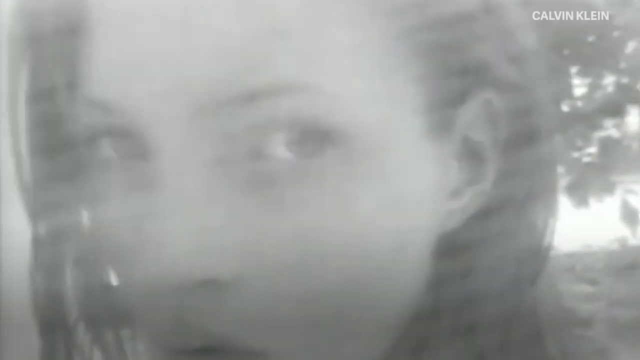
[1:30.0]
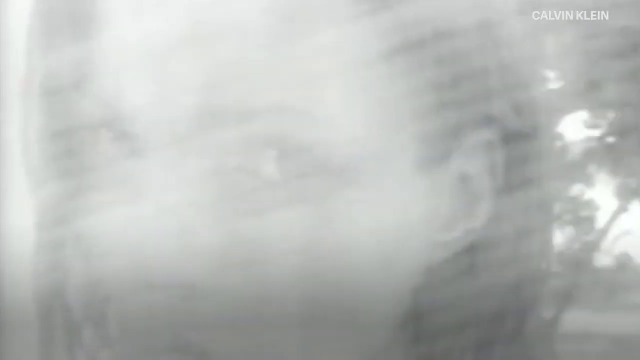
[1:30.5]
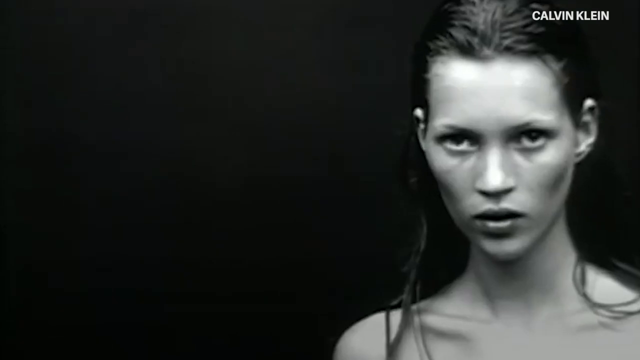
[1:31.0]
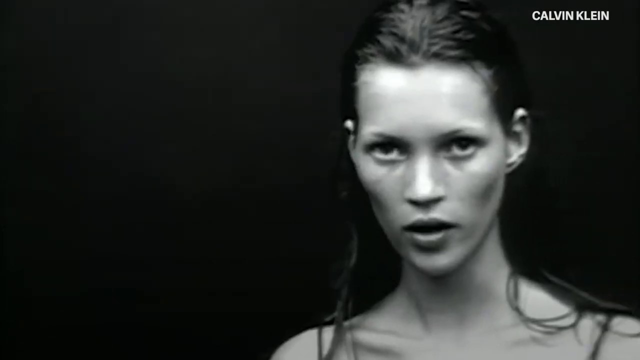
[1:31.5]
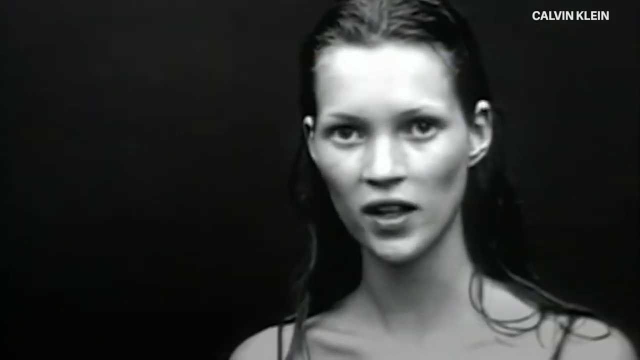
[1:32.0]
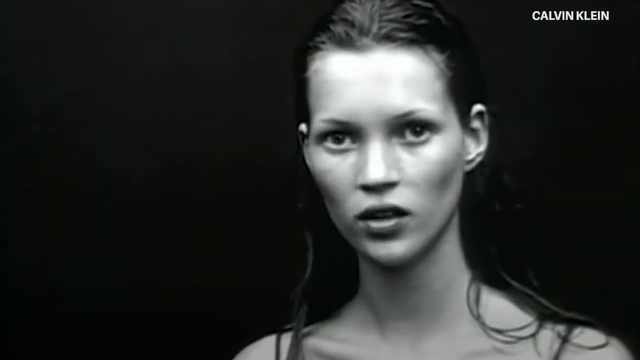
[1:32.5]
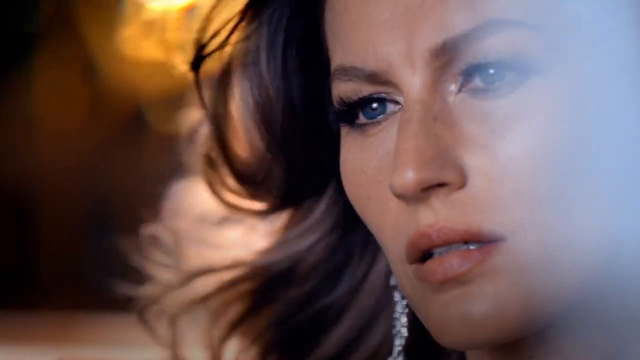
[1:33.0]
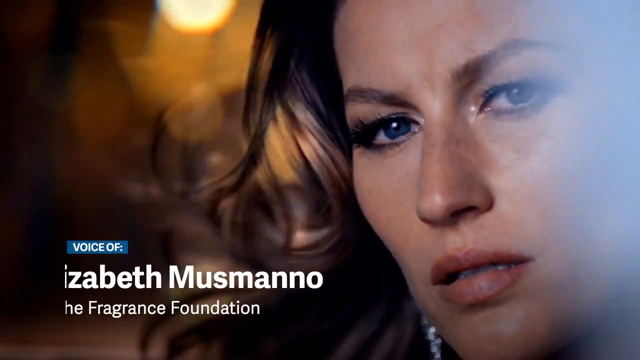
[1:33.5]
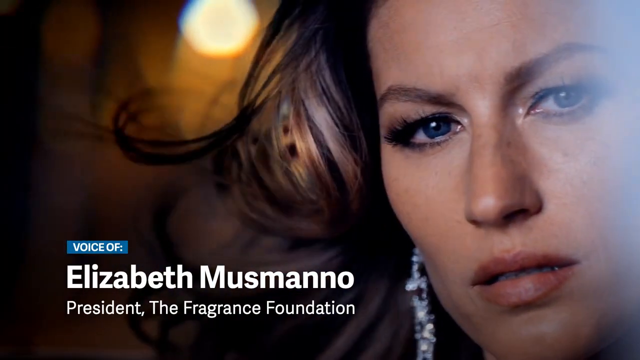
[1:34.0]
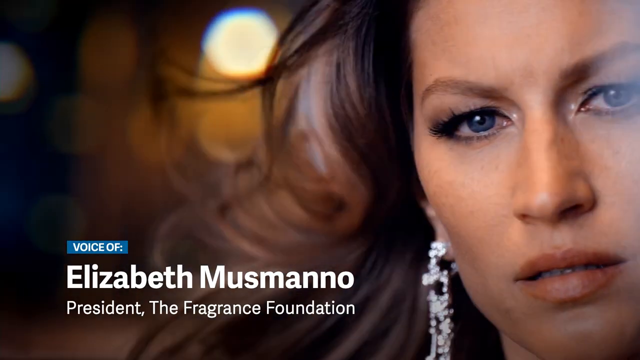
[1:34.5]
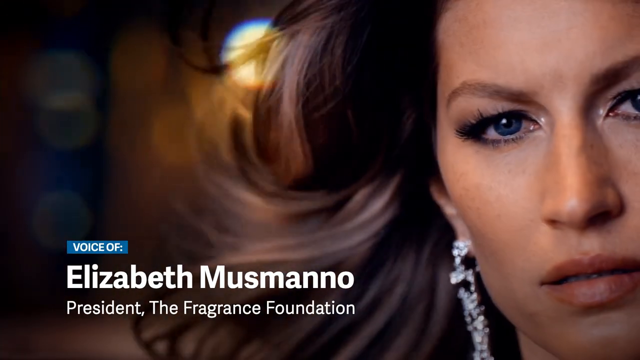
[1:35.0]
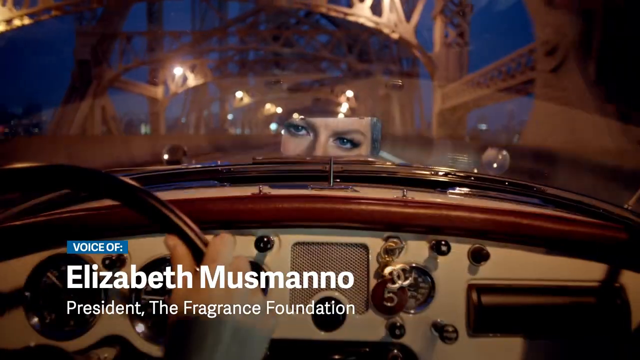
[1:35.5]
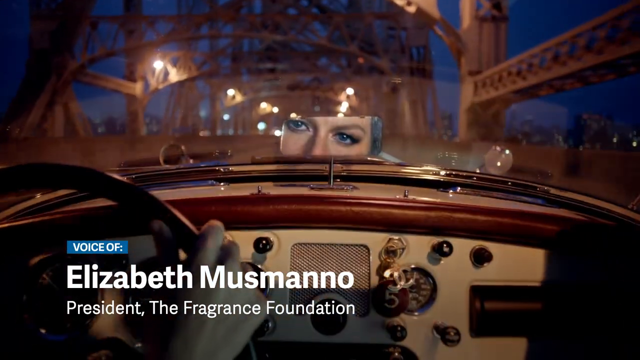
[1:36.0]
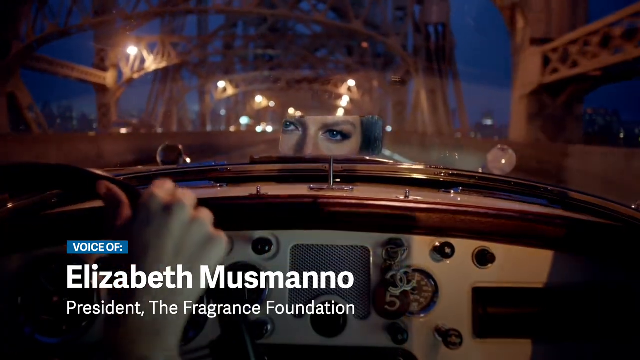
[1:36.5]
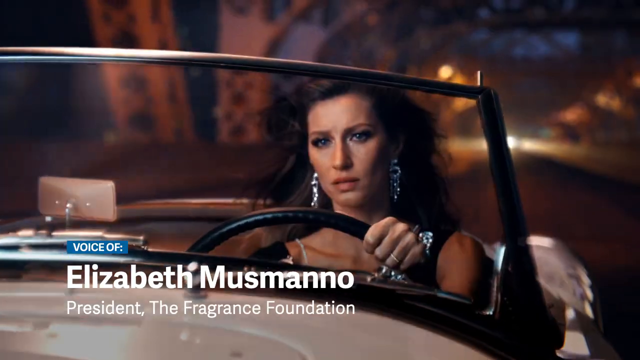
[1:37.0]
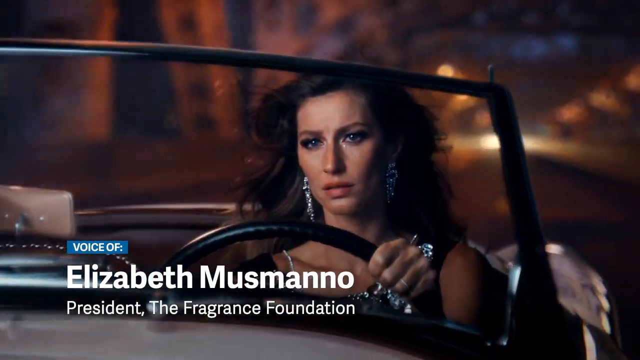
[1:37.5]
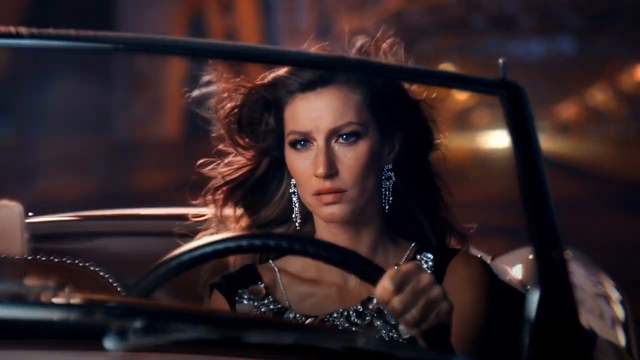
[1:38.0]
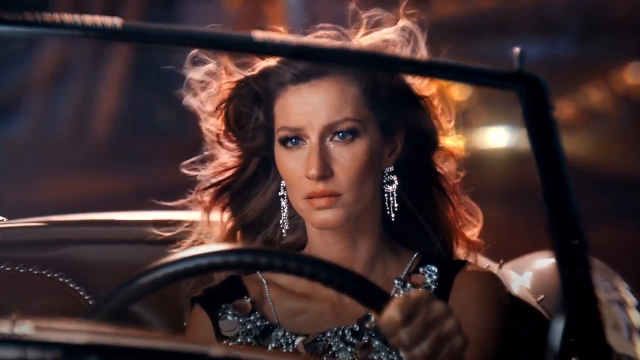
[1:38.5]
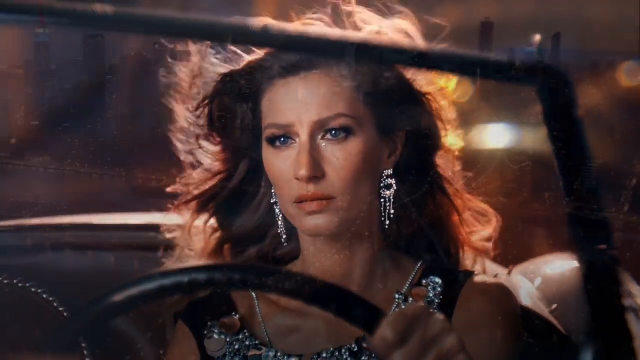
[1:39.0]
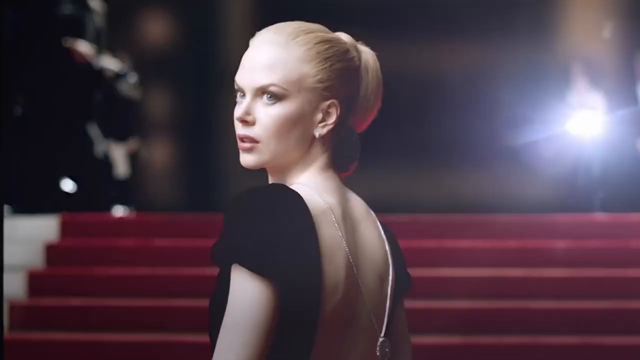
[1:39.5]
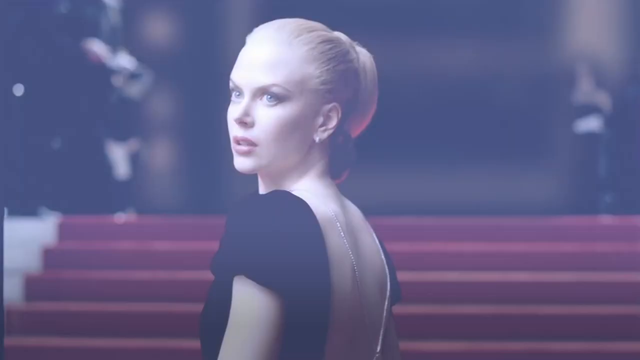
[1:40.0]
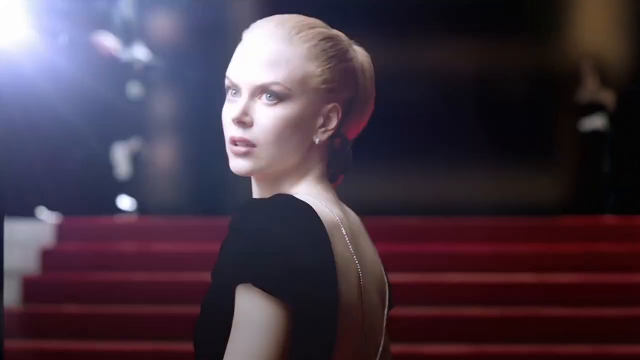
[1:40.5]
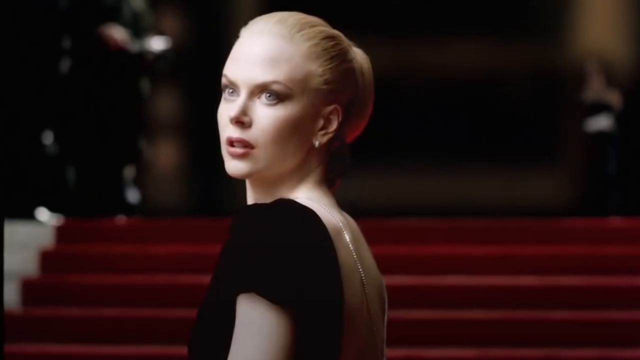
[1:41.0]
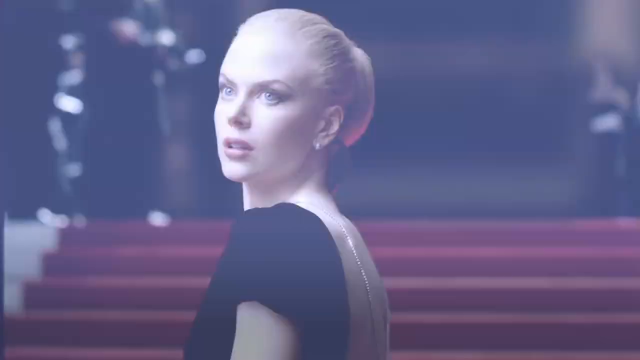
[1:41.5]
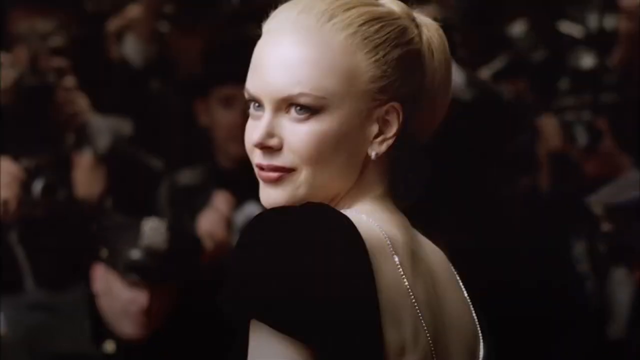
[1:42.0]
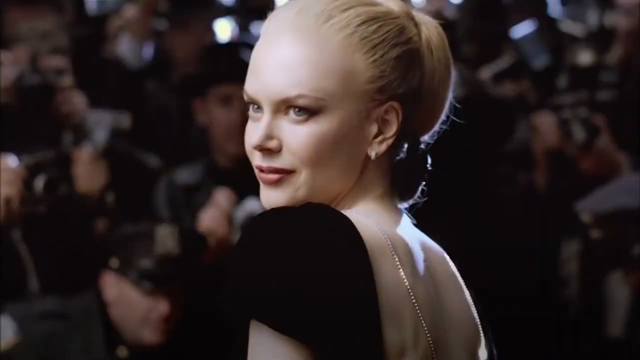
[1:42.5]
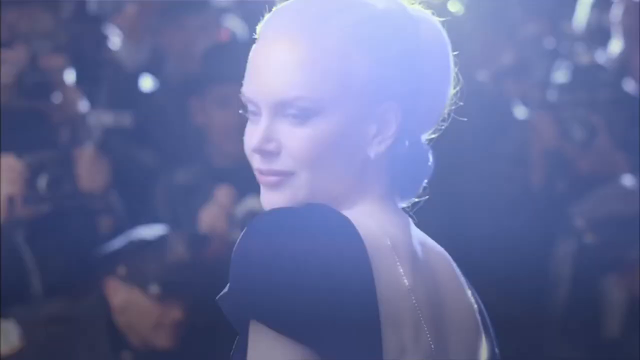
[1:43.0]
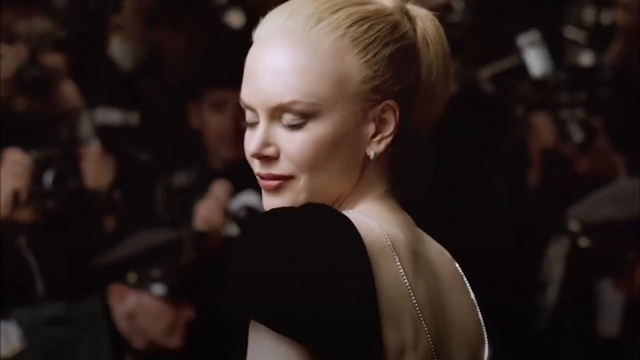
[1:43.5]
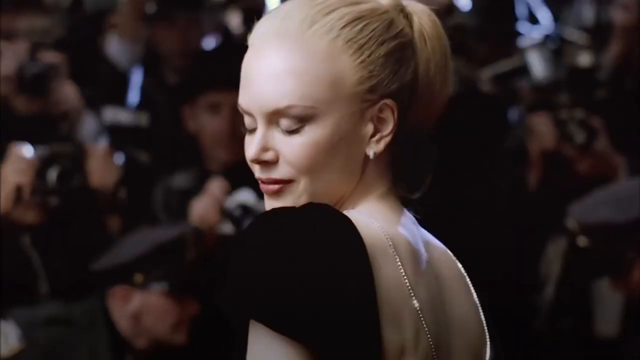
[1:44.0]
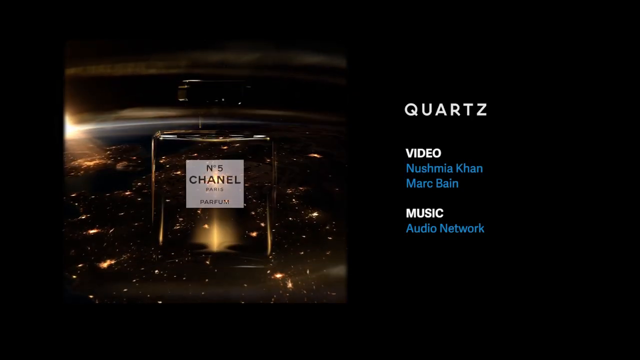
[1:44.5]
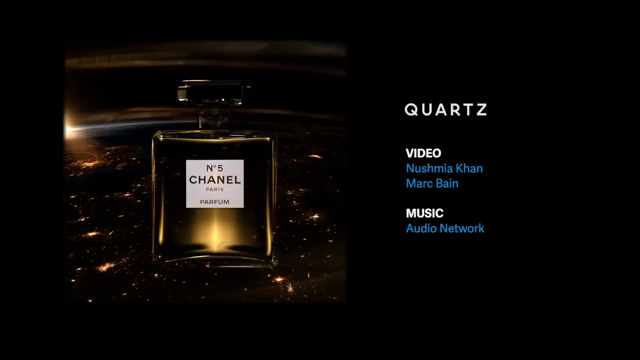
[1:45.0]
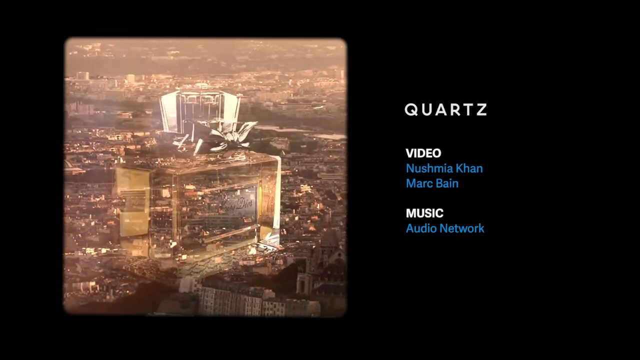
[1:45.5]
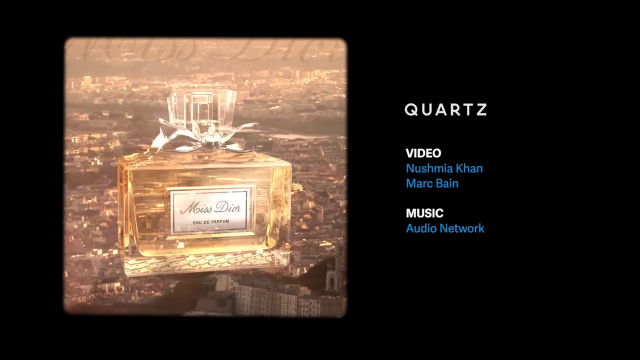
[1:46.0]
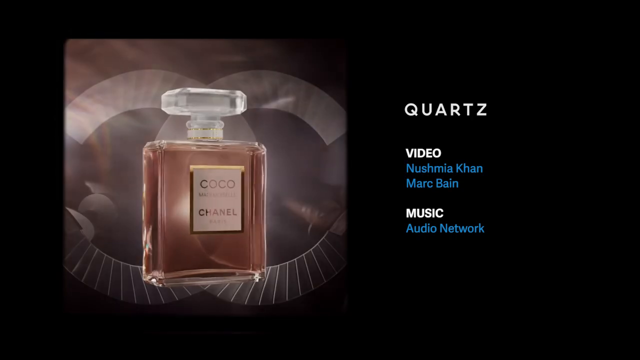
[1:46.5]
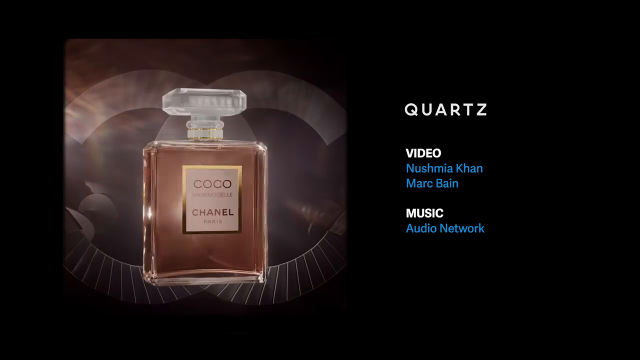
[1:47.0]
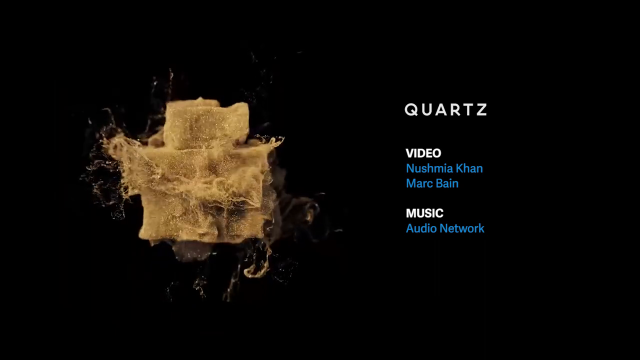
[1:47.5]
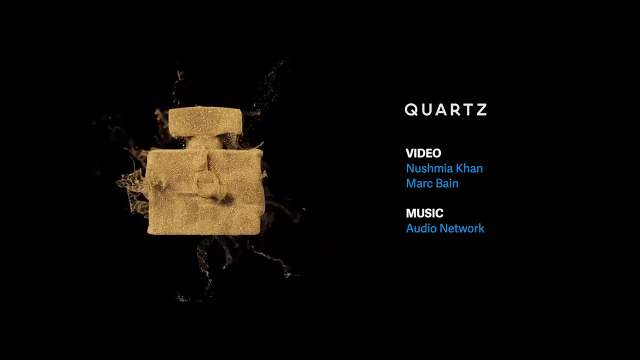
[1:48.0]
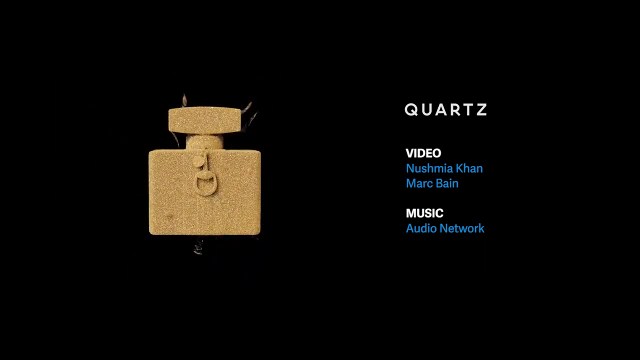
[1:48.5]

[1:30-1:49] A Calvin Klein perfume ad features an unidentified woman who looks like she may be underweight in the face; text apparently shows she used to be a Victoria's Secret model, and she is on the right side of the screen. A credit mentions "the fragrance foundation." A woman is driving, then Nicole Kidman appears in a commercial for Chanel. Closing credits include "music by audio network."